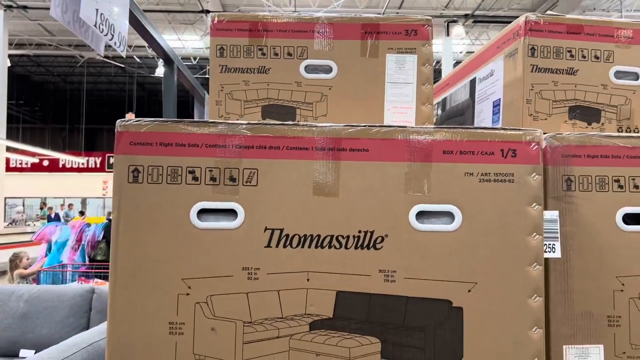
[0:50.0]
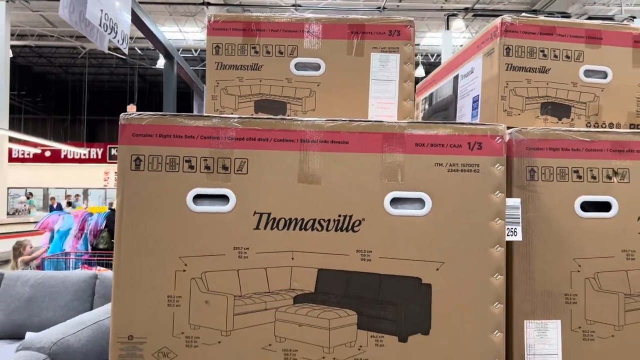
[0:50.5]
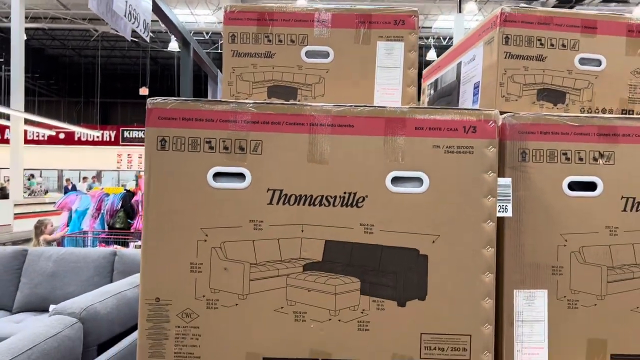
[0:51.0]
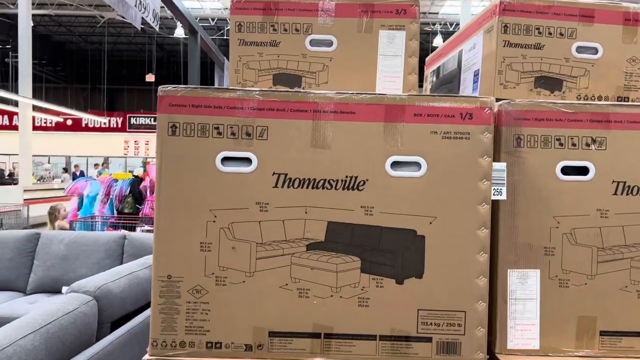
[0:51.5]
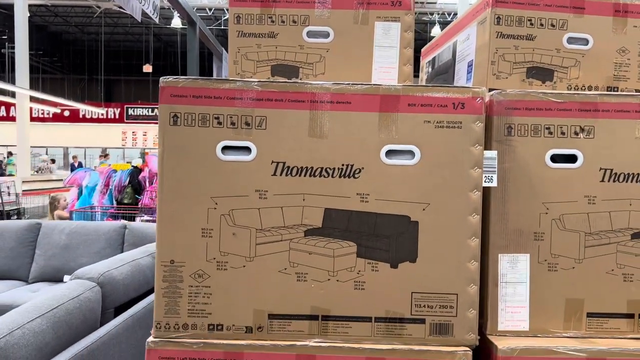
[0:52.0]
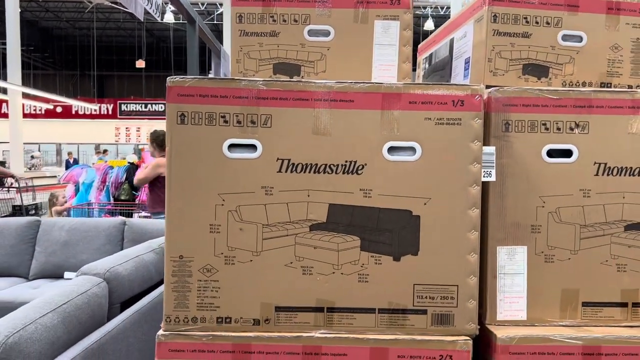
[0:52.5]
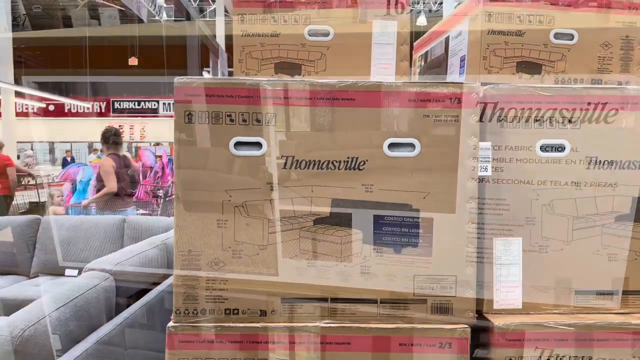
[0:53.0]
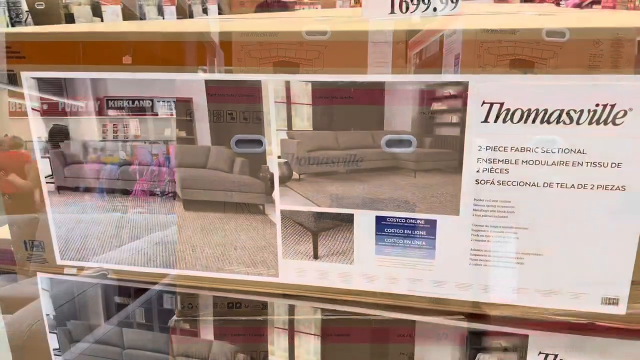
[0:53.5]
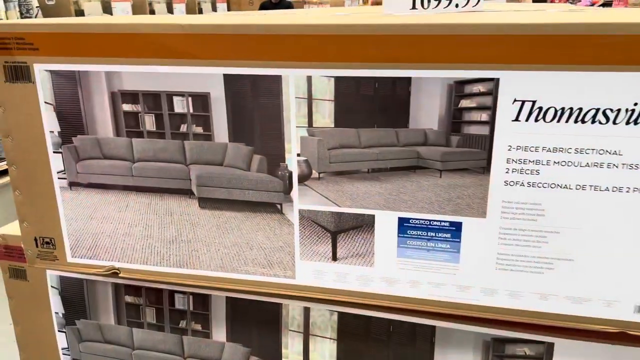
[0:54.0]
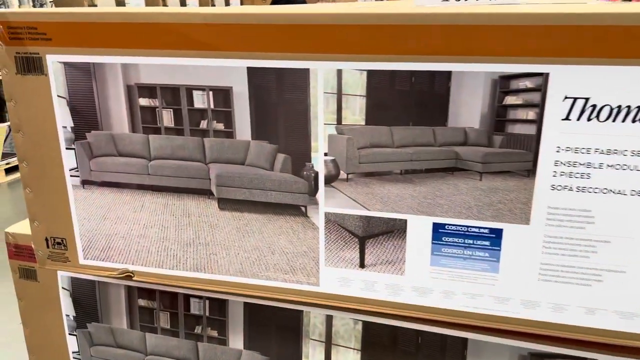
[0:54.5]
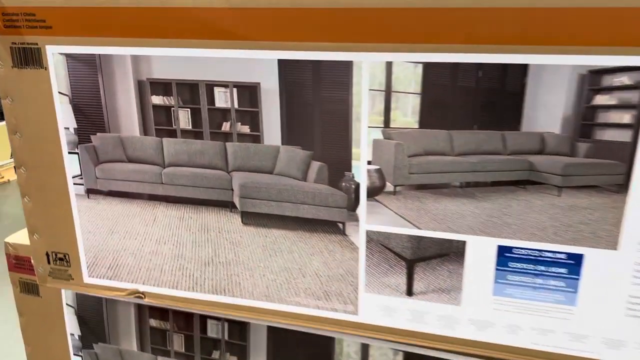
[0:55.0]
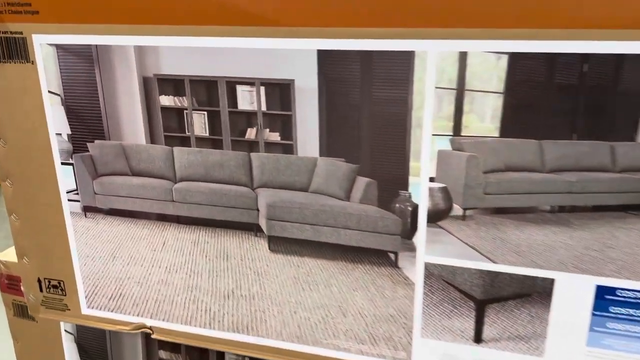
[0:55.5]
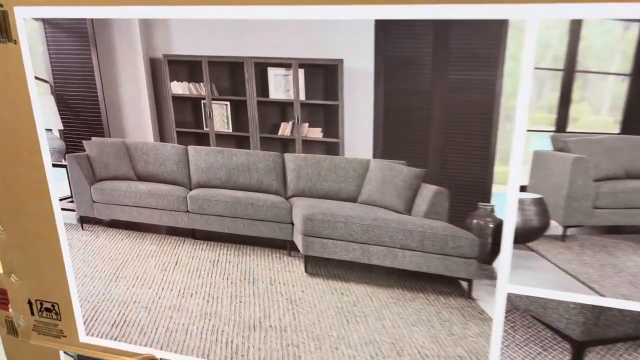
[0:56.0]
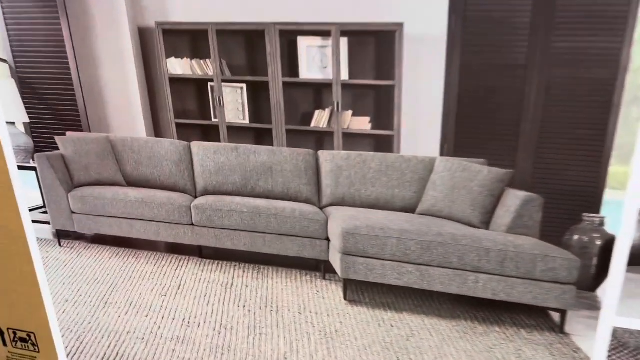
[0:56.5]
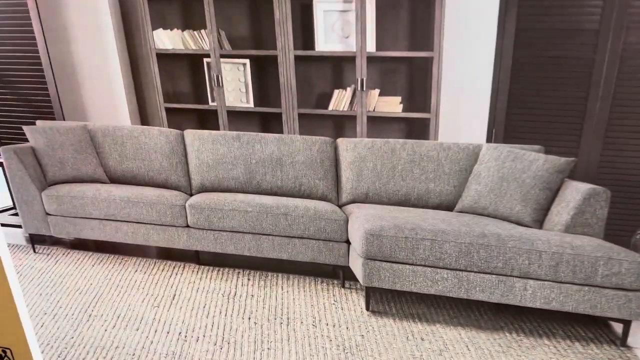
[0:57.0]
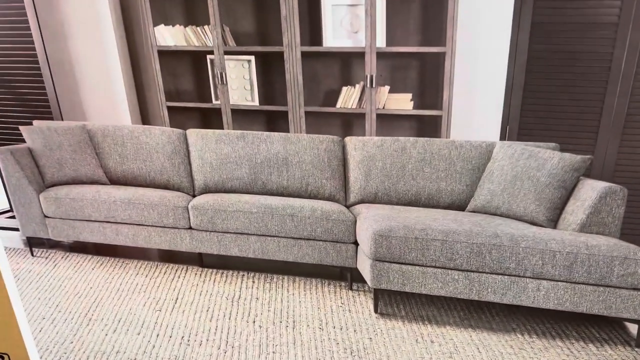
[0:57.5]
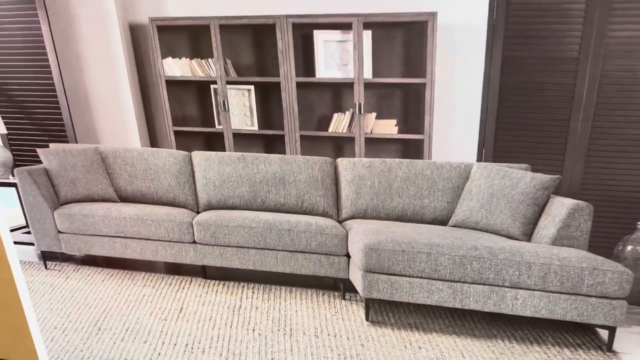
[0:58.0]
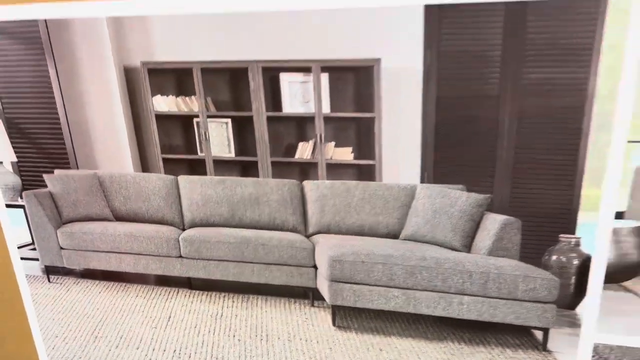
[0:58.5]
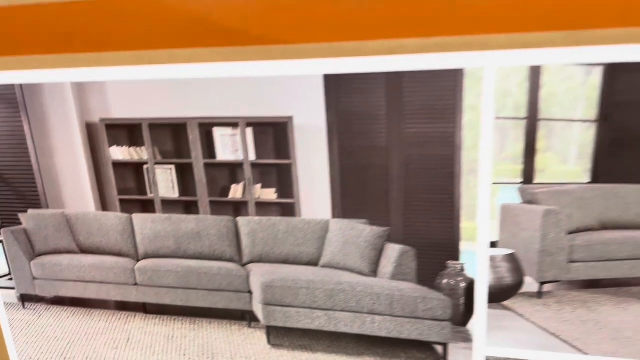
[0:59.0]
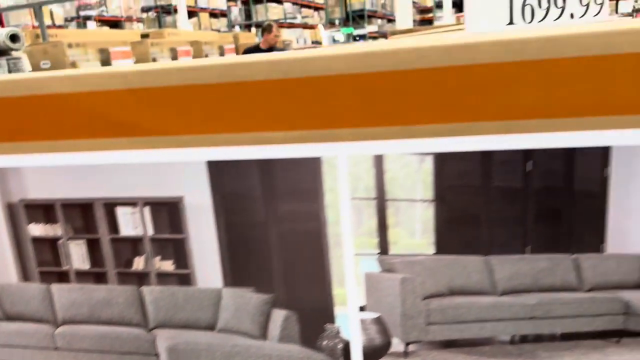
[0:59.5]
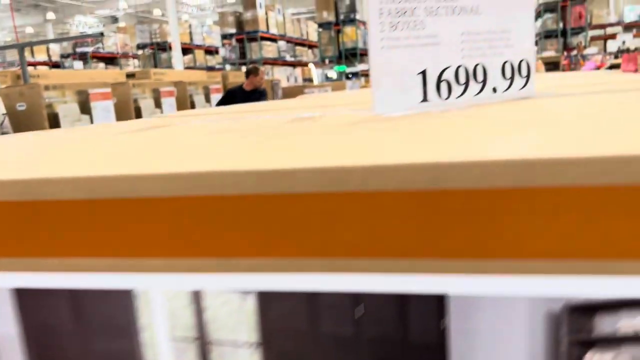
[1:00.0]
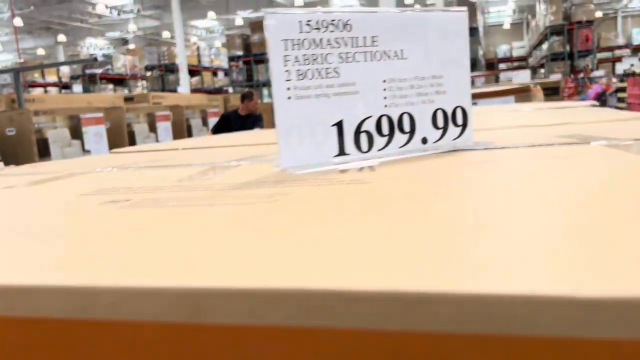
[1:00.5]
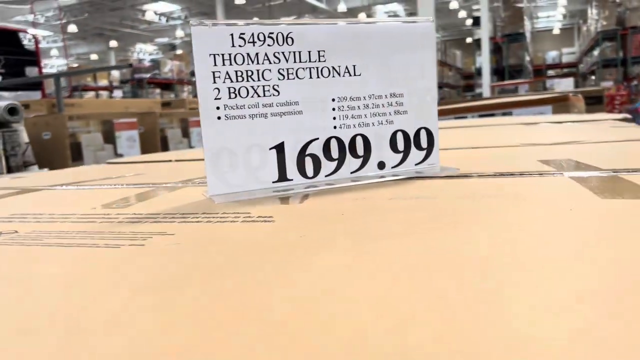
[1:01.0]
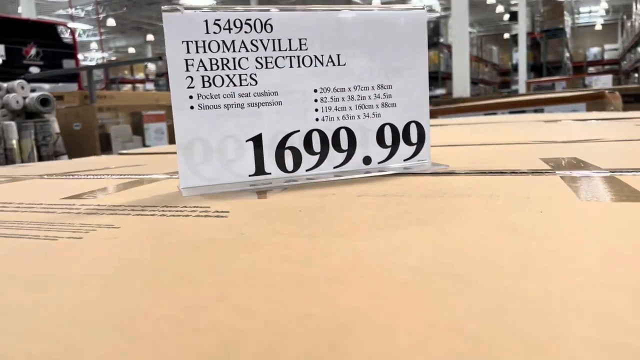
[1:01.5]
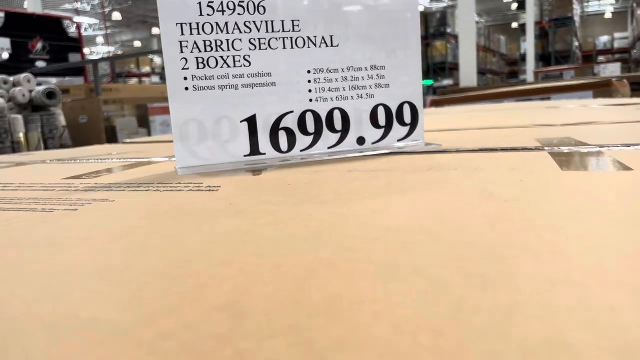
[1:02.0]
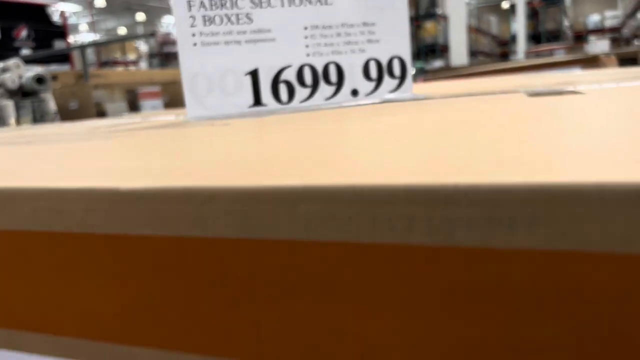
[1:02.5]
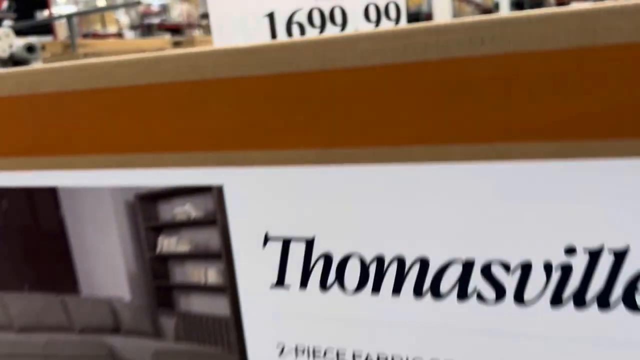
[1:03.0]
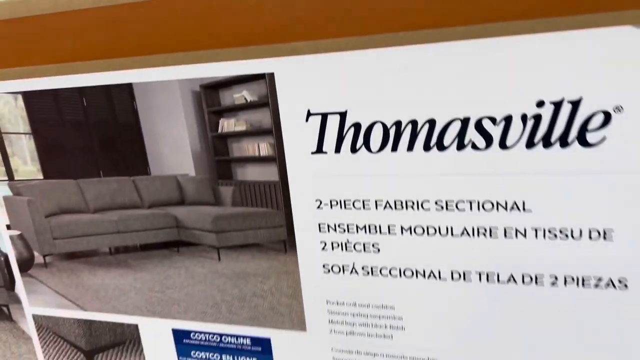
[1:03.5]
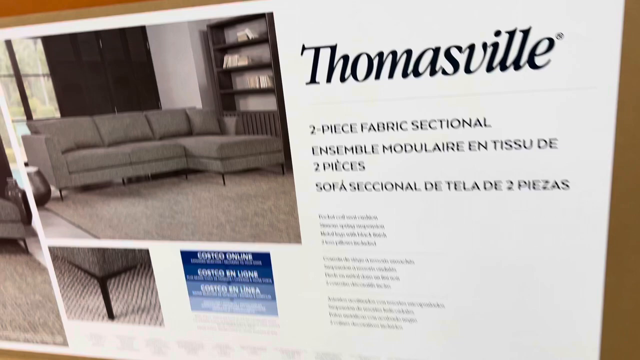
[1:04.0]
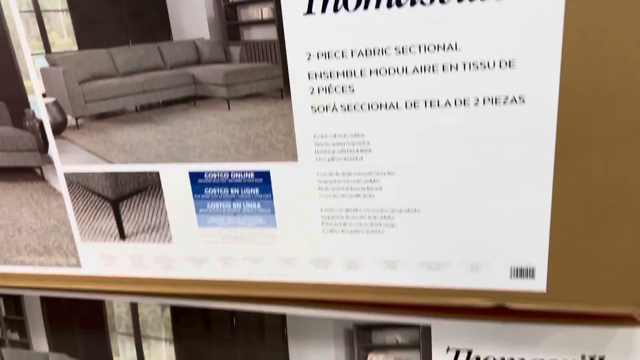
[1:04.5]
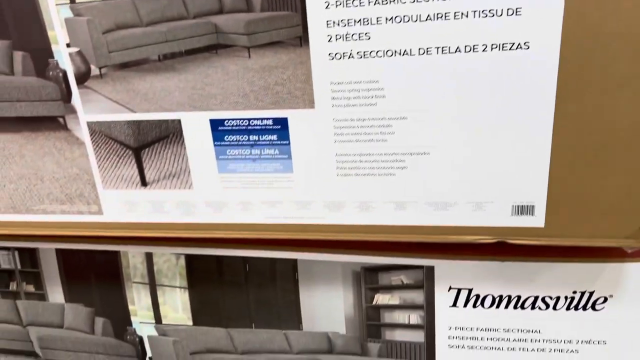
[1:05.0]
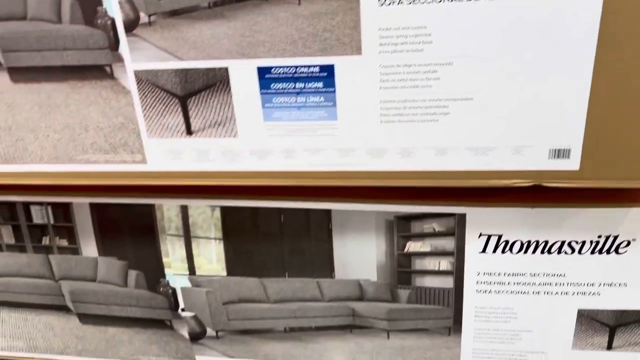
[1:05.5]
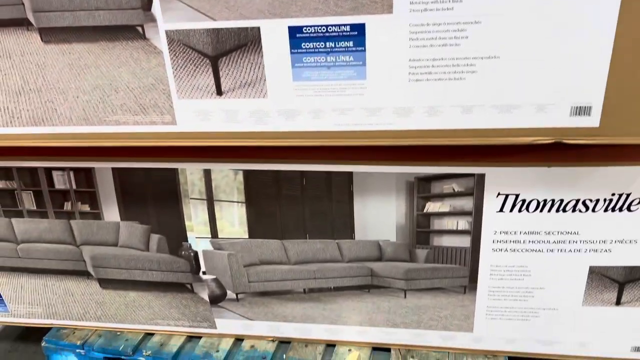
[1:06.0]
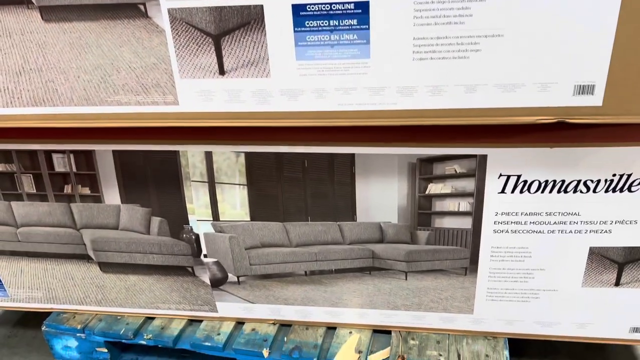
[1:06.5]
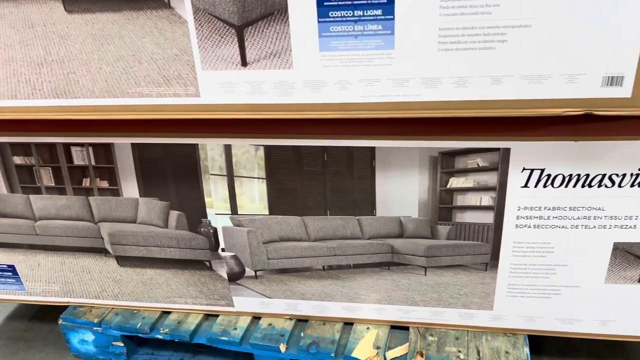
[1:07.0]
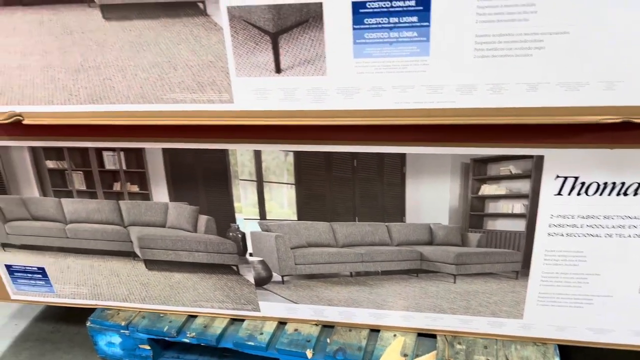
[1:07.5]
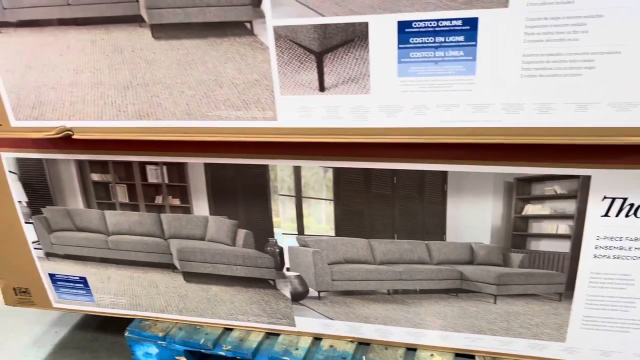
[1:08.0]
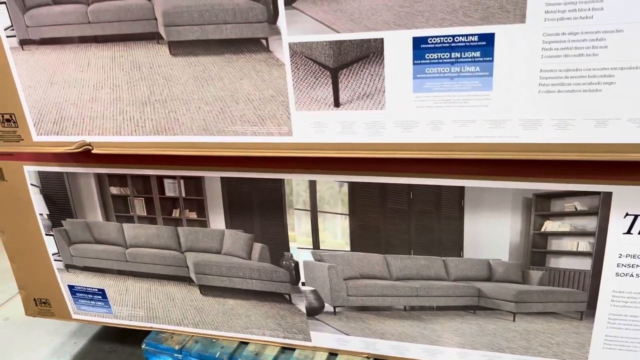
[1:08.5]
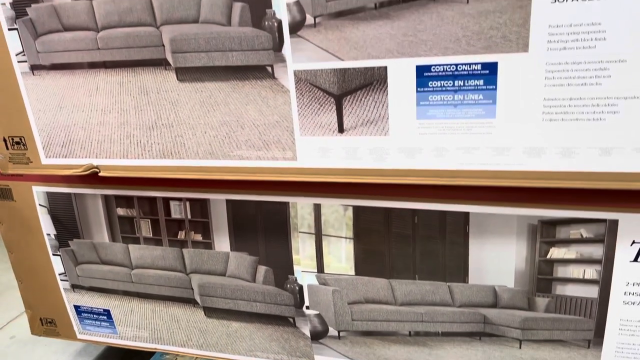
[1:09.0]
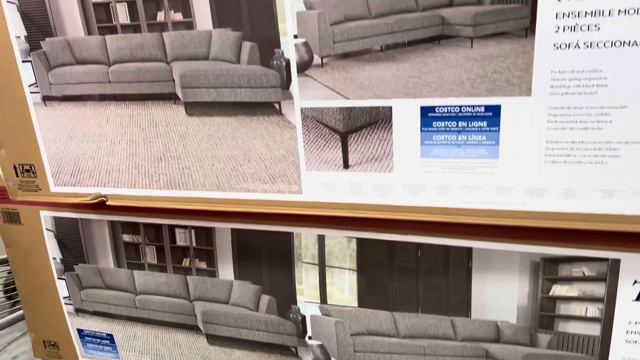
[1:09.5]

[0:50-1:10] Each of the boxes is right side up and shows the Thomasville logo and the simple sectional drawing on the front. The person records a different side of the box that seems to have a barcode and other images of the sofa. This side features two larger images and one smaller one; the smaller image is of the part of the couch that is on the floor. The carpet in the room where the couch is displayed is gray, and the cabinetry and blinds behind it are a dark brown wooden color. The shelves behind the couch seem to hold a couple of different books and pieces of art. The couch seems to come only in this color. A price tag on top of the box says $1699.99 and indicates that two boxes need to be picked up for the whole set.